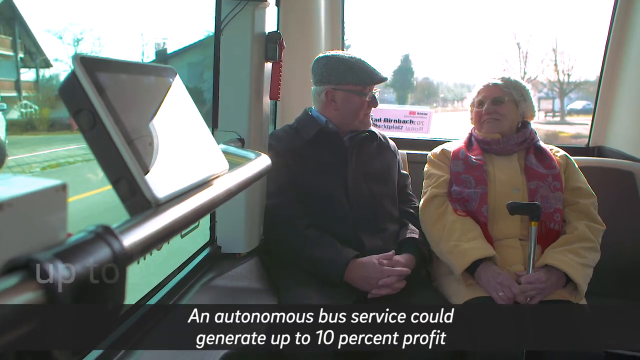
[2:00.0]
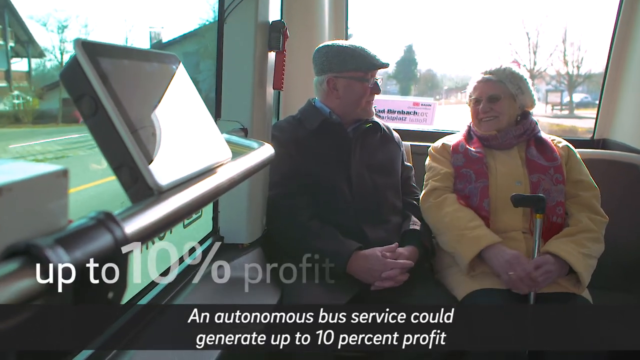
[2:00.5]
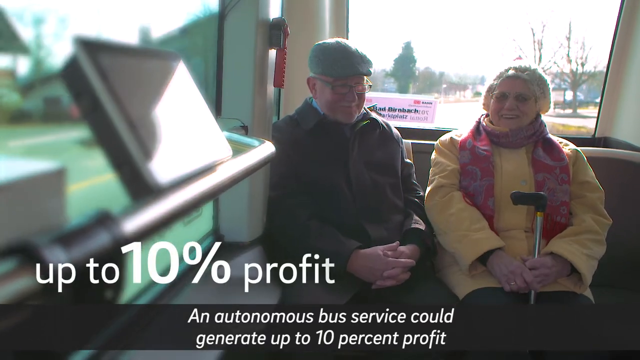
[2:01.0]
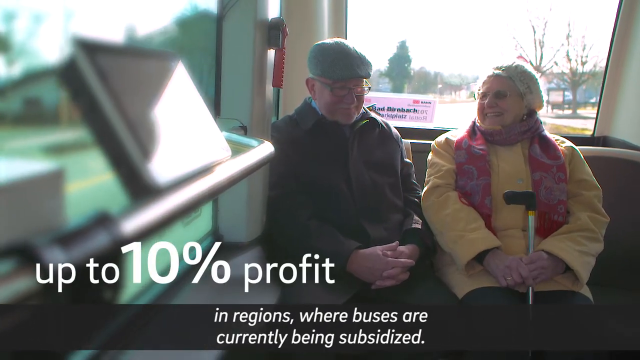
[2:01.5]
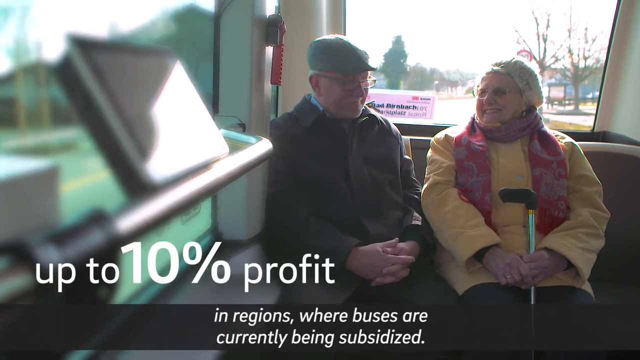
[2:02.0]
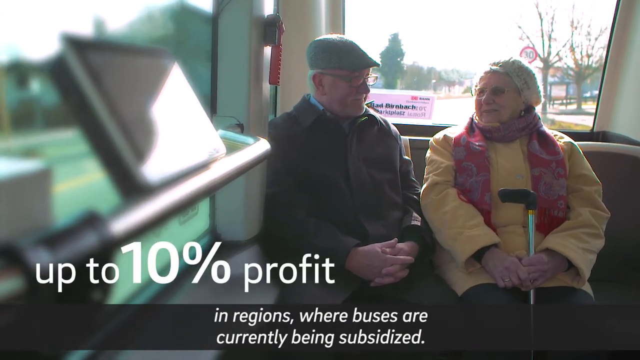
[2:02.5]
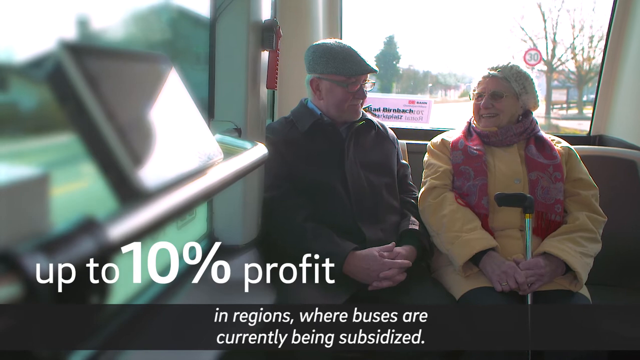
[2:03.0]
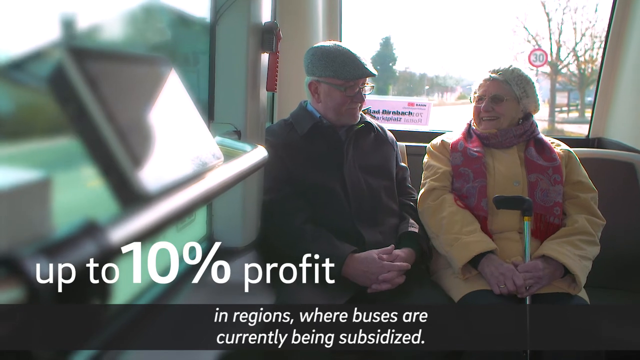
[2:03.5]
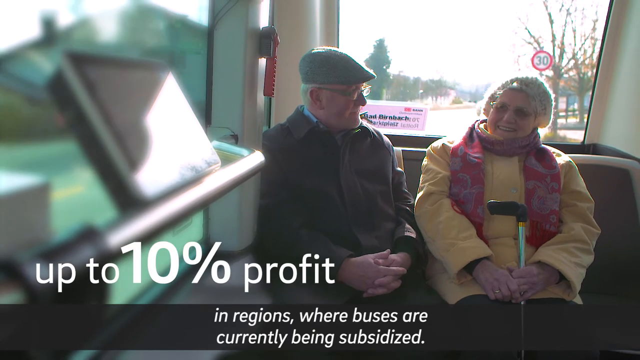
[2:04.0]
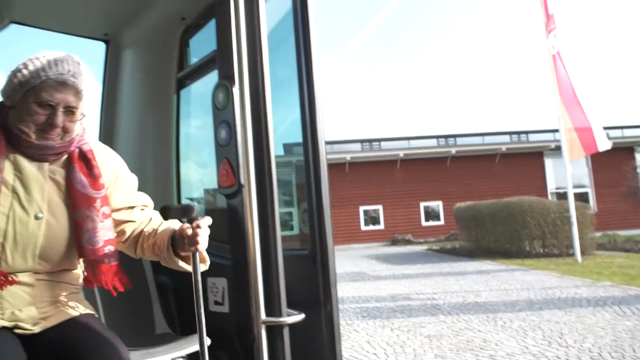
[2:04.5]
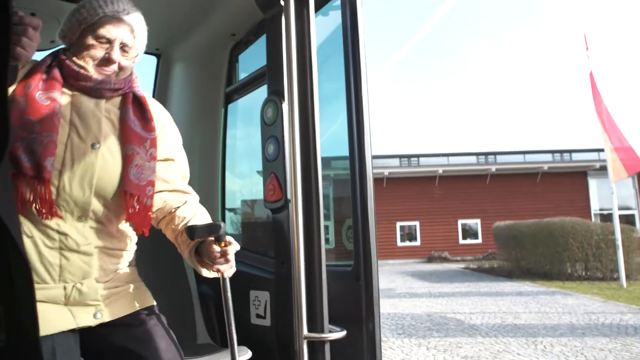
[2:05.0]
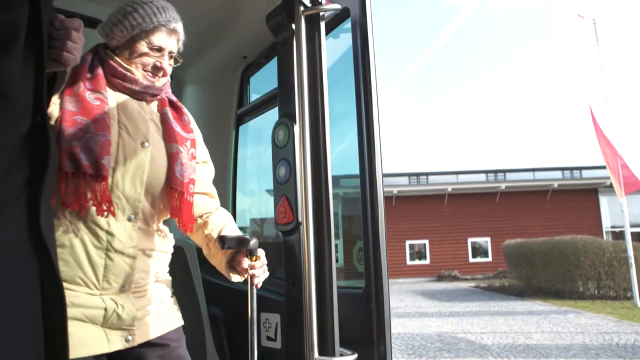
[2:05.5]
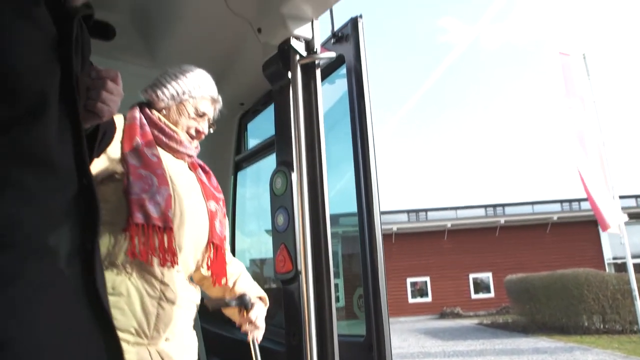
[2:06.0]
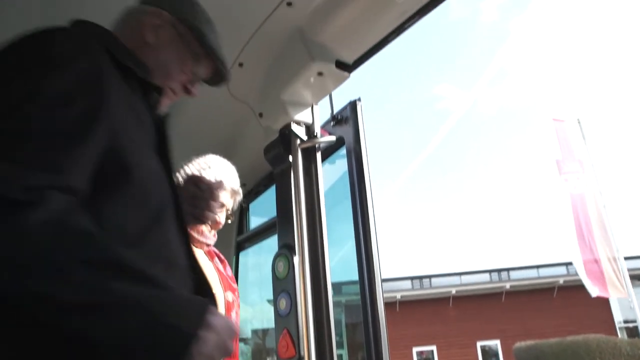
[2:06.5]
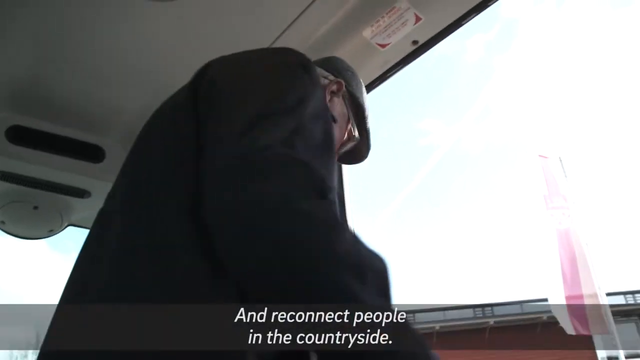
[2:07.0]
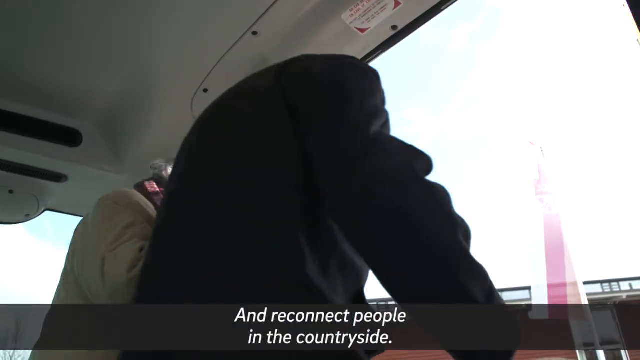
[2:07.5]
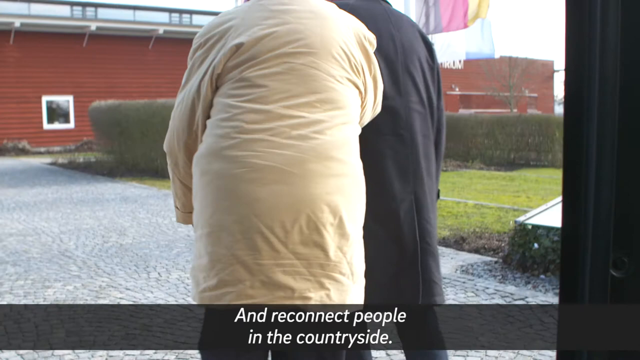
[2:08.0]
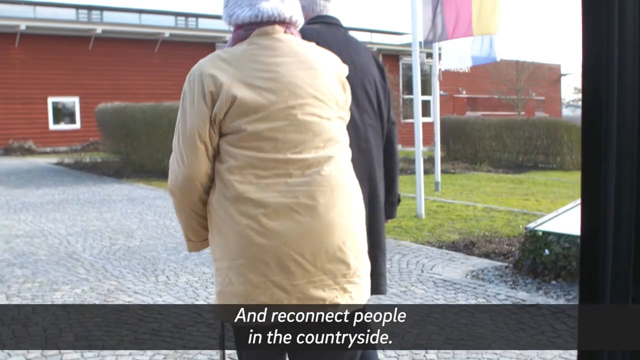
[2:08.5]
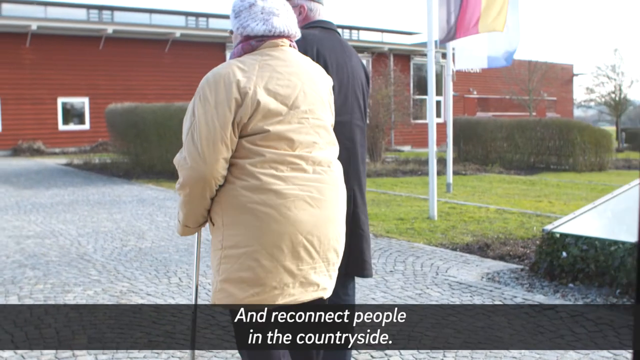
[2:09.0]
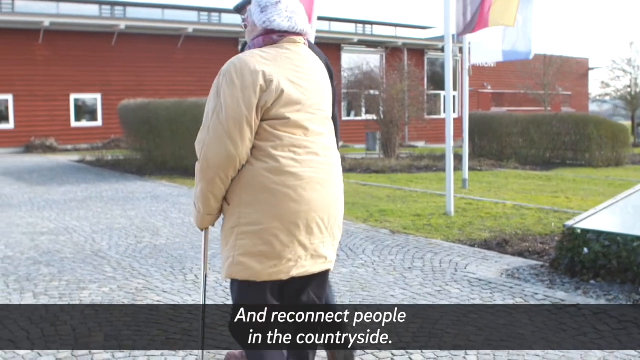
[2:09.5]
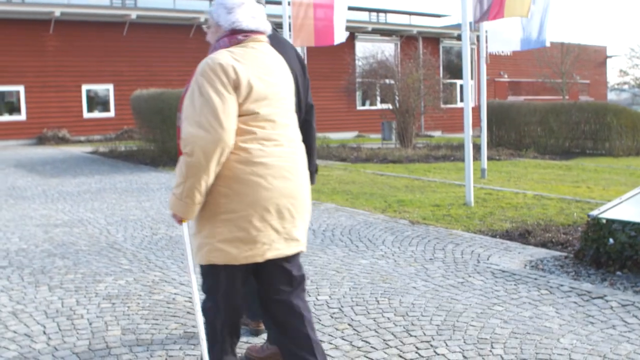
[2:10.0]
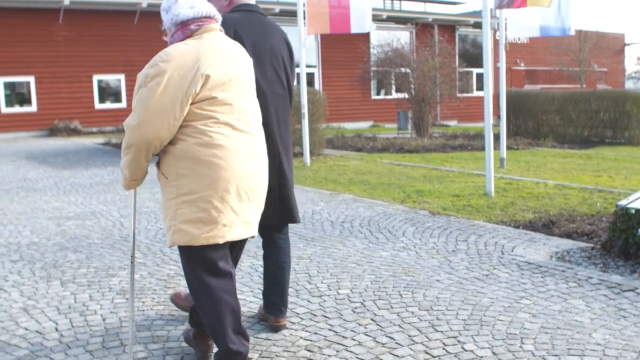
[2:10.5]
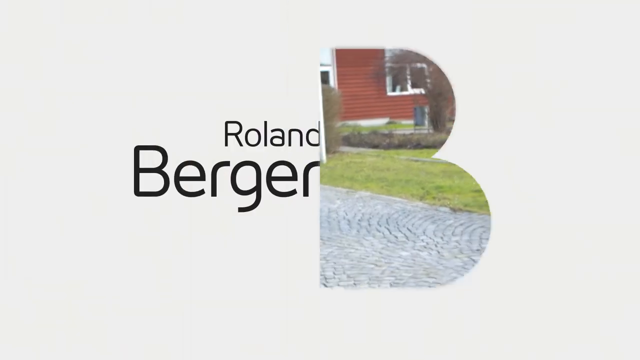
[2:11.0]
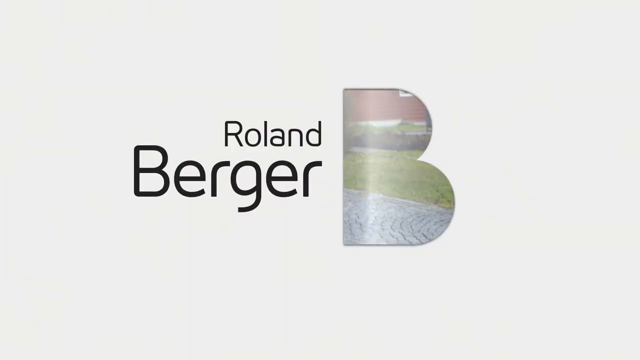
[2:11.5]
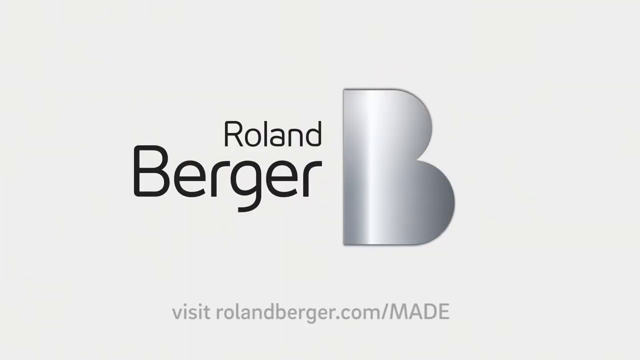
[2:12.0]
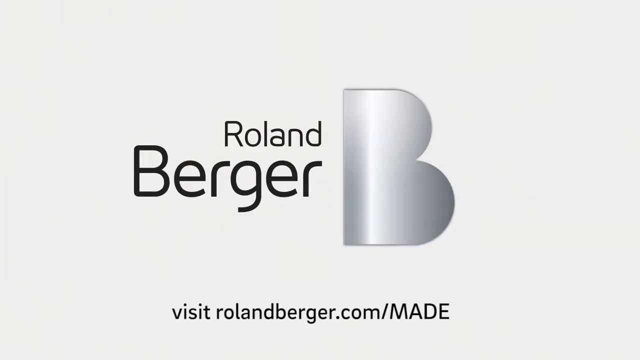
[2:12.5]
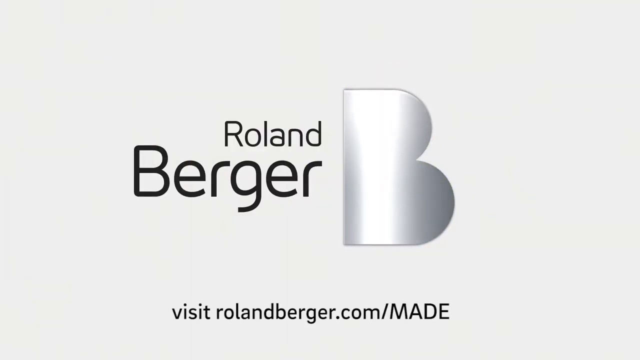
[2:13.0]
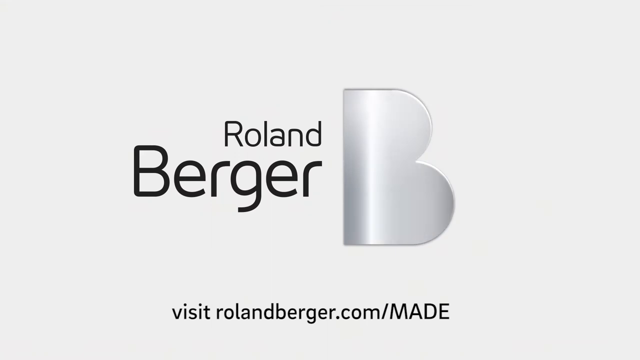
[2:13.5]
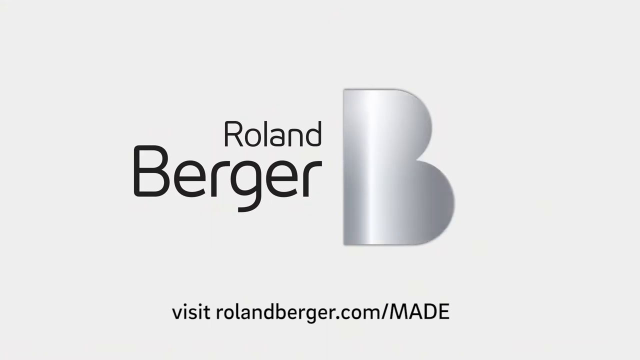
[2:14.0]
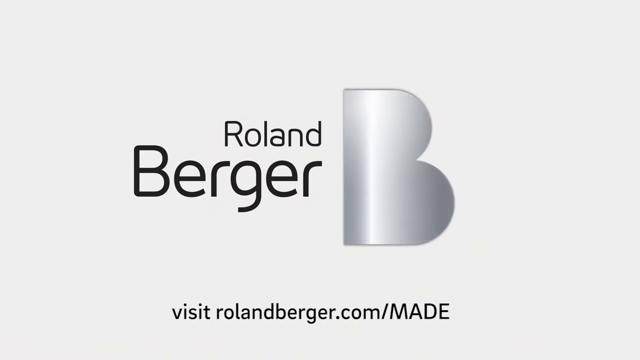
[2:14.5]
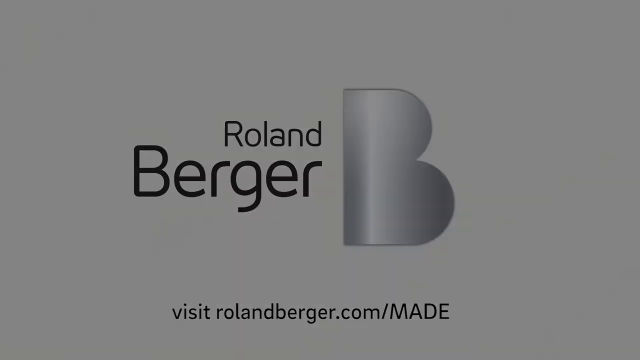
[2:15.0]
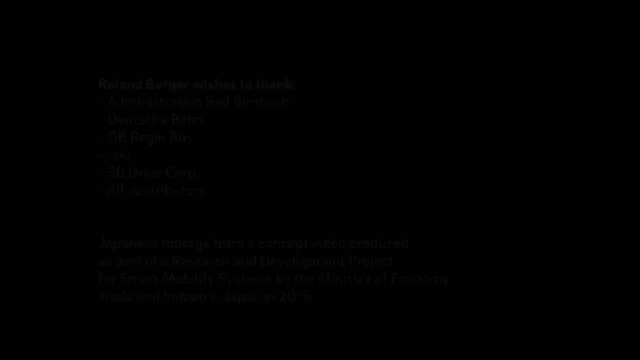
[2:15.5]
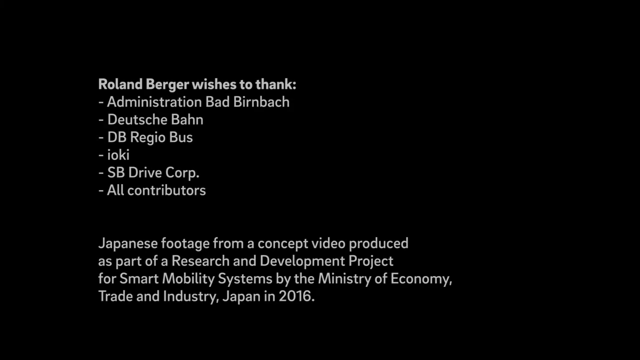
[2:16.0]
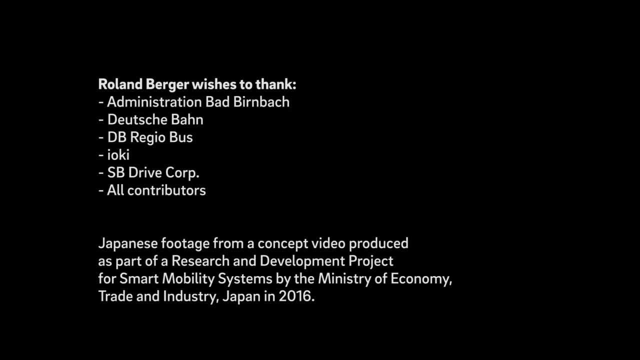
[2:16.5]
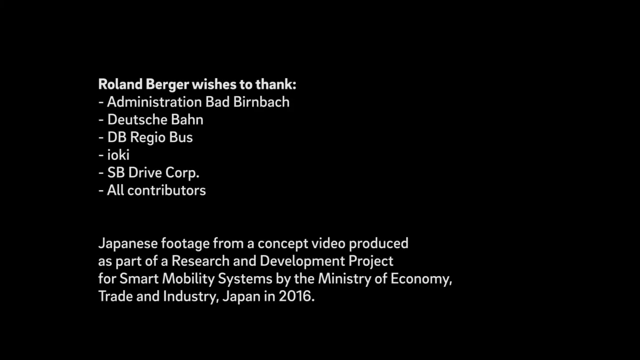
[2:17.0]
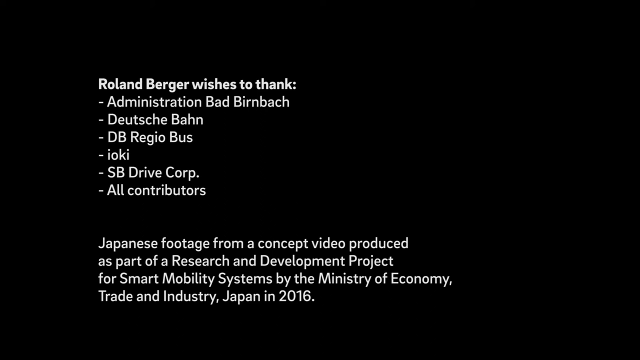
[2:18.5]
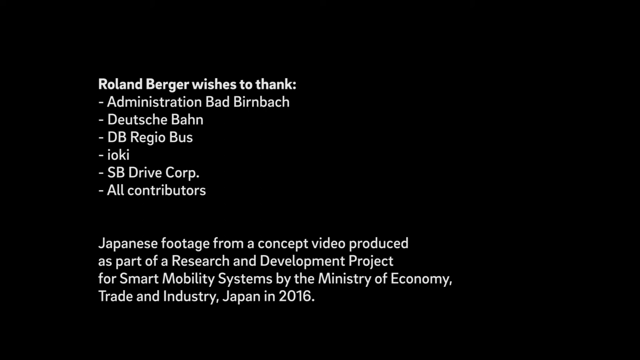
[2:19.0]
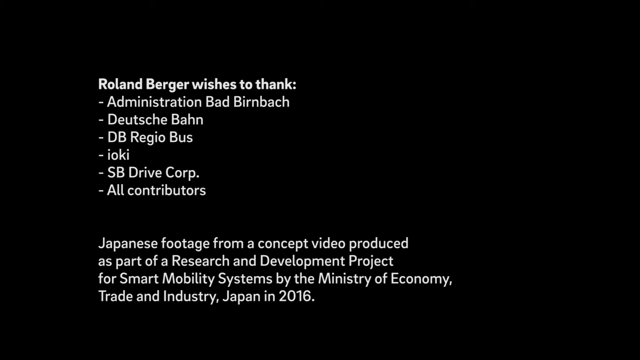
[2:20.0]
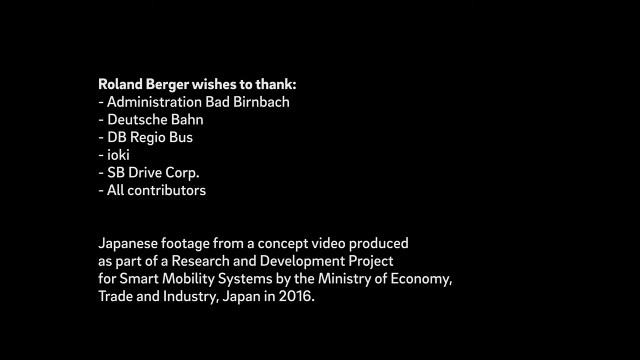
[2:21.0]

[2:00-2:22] Two elderly people are shown: the woman in the yellow puffy jacket and mostly red scarf, holding a cane, and the man she is talking to. On camera she appears to turn toward the left, but she is actually turning toward her right, toward him. Text reads "up to 10% profit" and mentions regions where buses are currently being subsidized. The two get off the bus, and text reads "they reconnect people in the countryside." At the end, "Roland Berger" appears, followed by "visit rolandberger.com/MADE" with "MADE" in all capital letters, and a thank-you to all contributors.